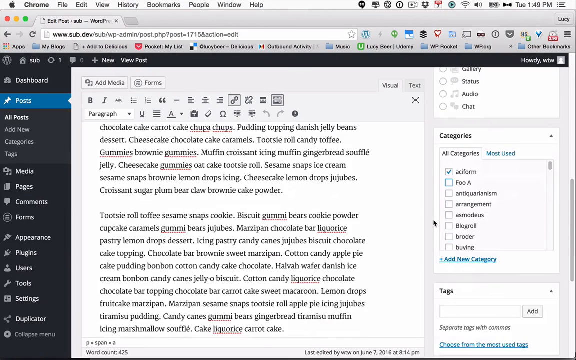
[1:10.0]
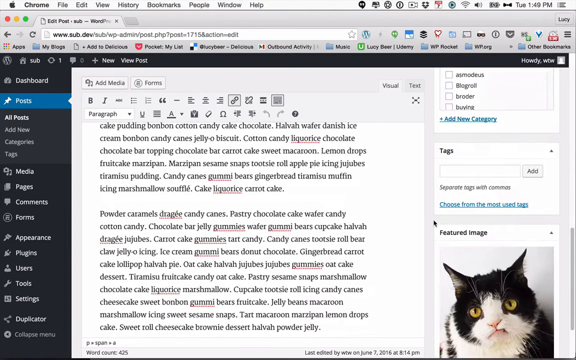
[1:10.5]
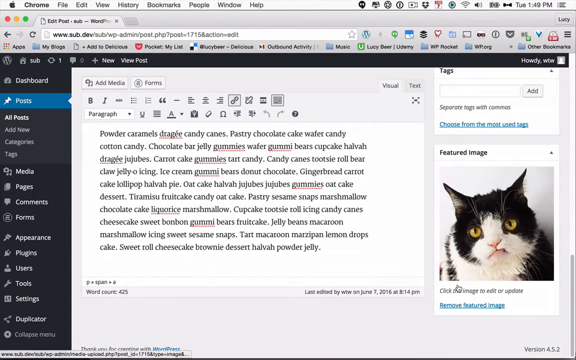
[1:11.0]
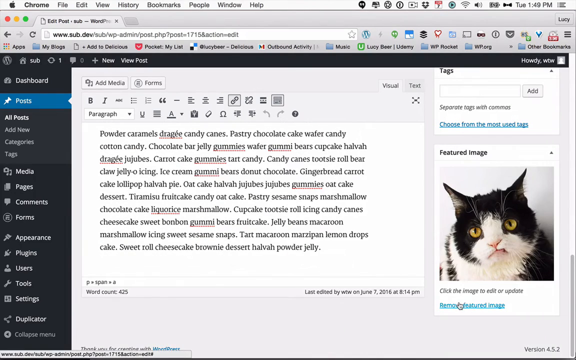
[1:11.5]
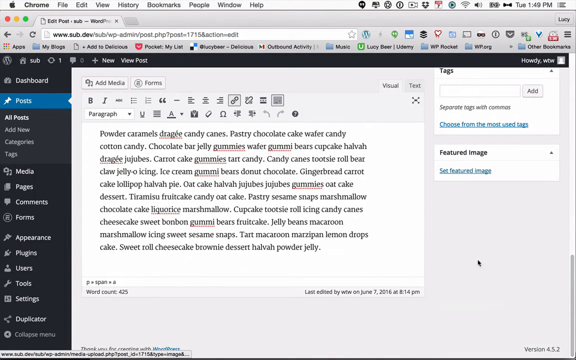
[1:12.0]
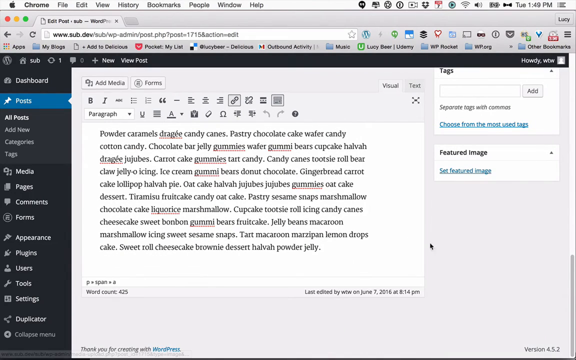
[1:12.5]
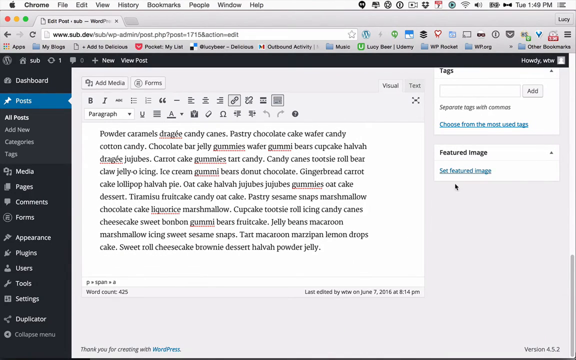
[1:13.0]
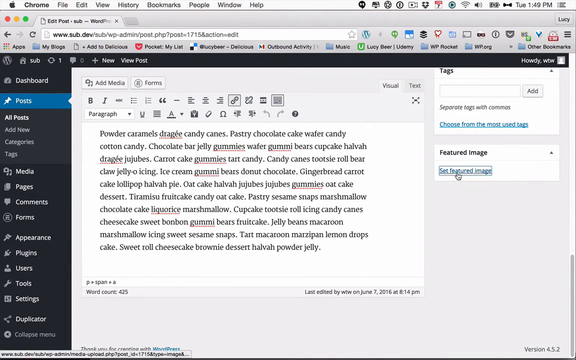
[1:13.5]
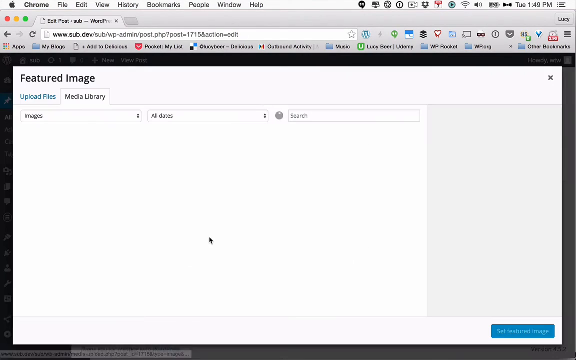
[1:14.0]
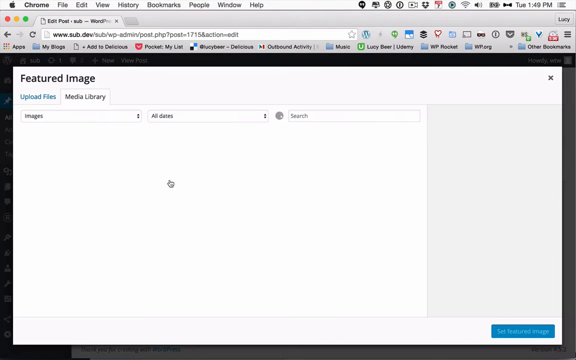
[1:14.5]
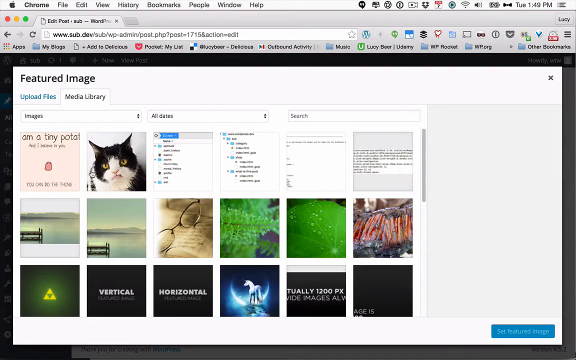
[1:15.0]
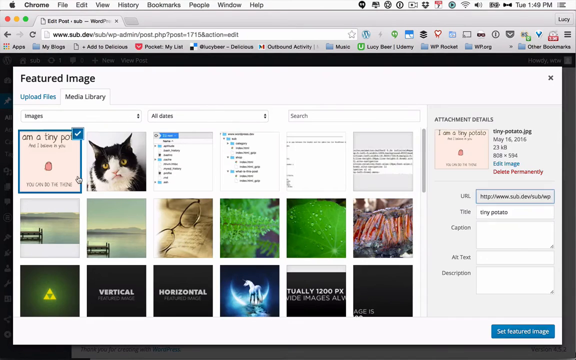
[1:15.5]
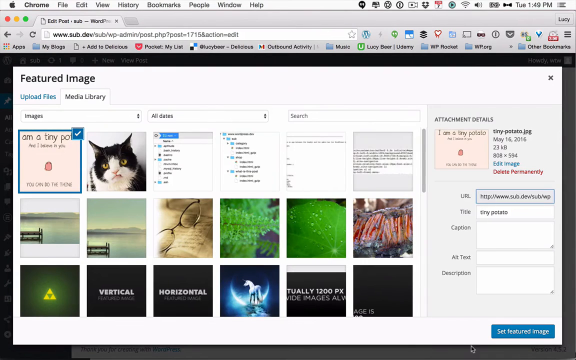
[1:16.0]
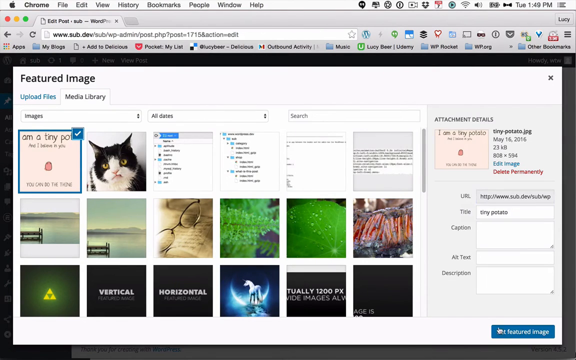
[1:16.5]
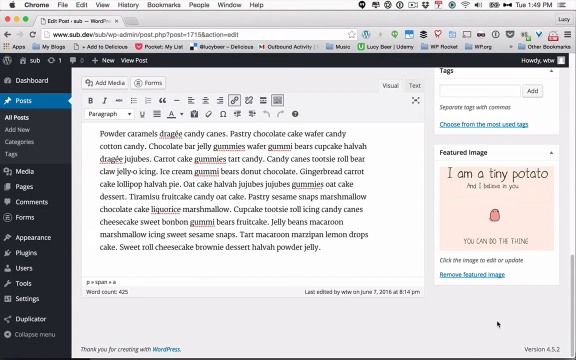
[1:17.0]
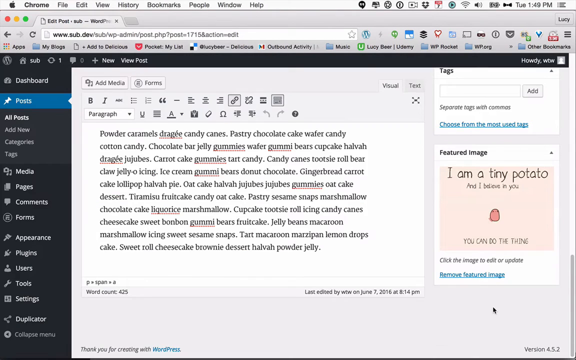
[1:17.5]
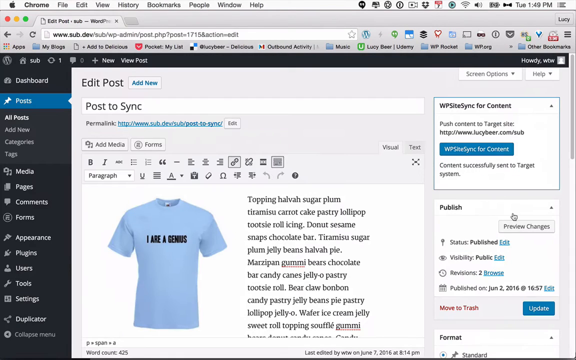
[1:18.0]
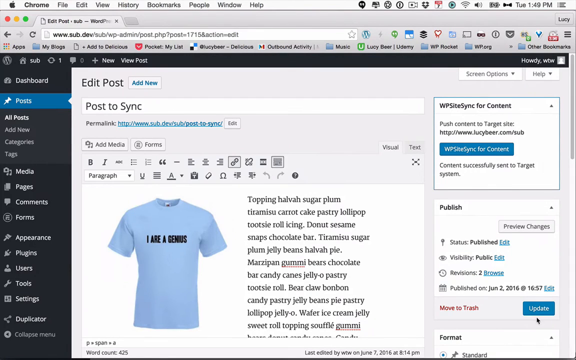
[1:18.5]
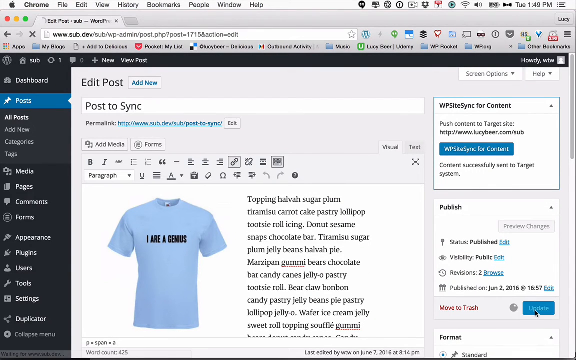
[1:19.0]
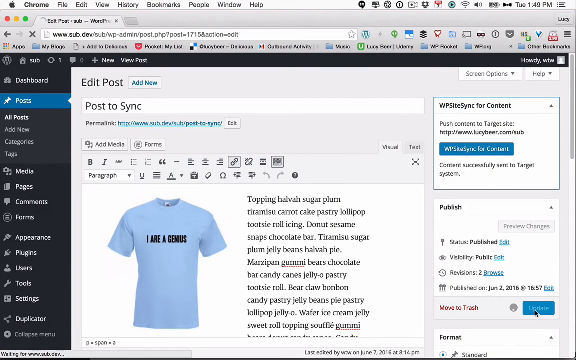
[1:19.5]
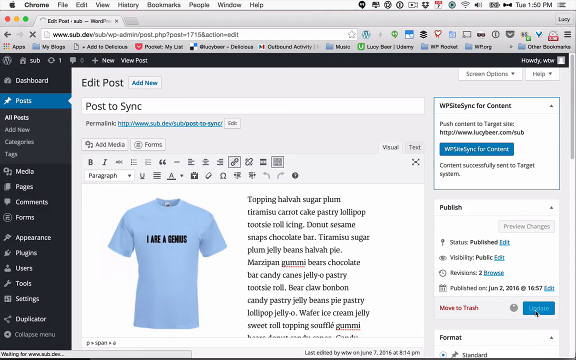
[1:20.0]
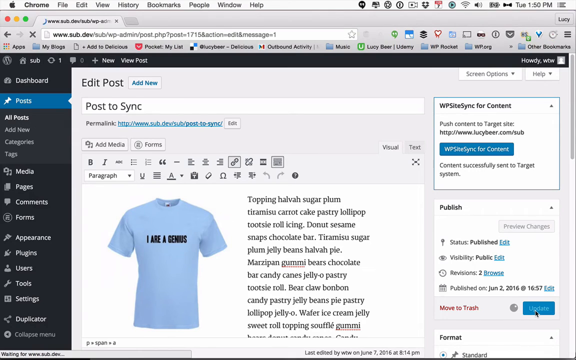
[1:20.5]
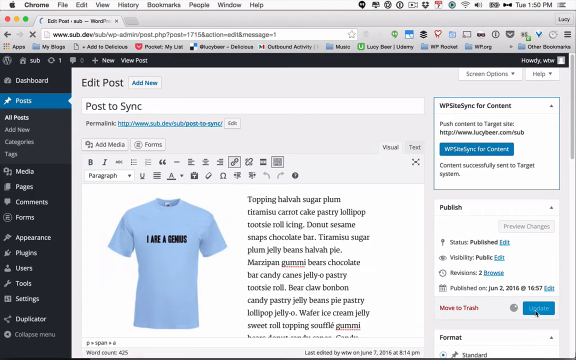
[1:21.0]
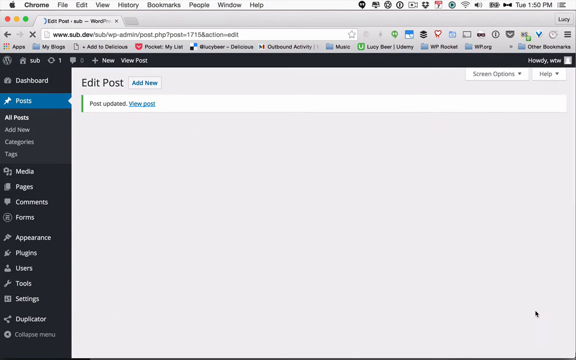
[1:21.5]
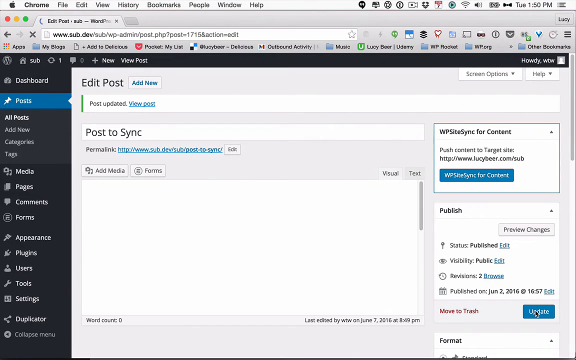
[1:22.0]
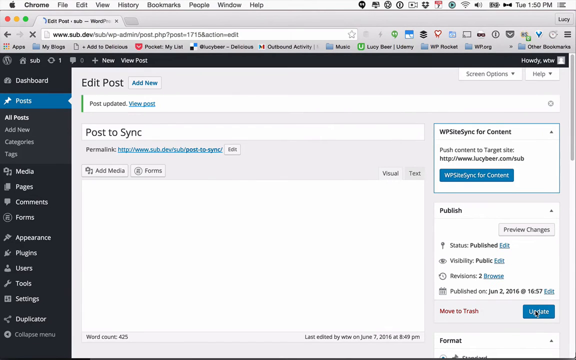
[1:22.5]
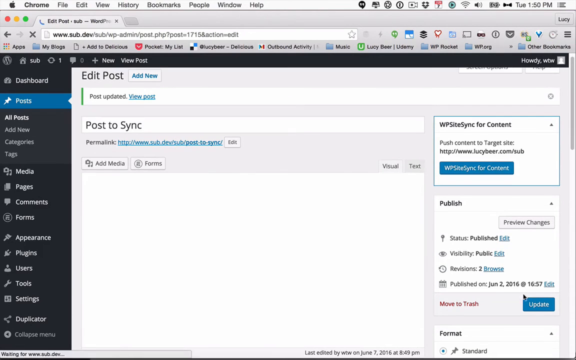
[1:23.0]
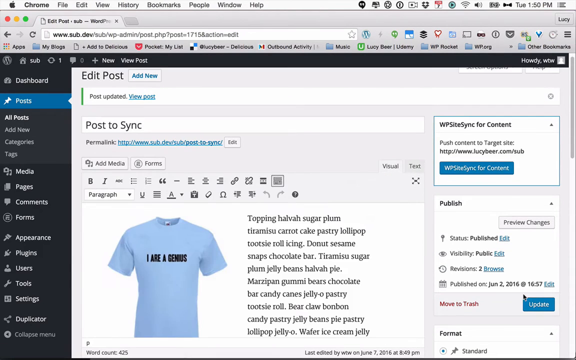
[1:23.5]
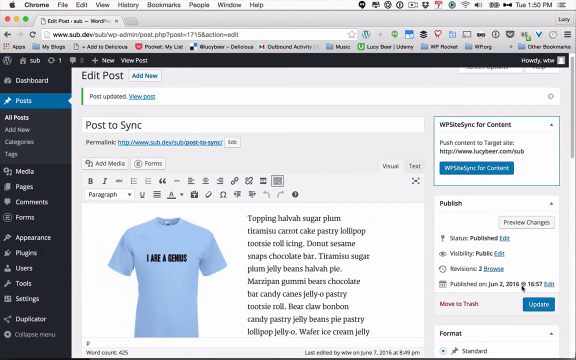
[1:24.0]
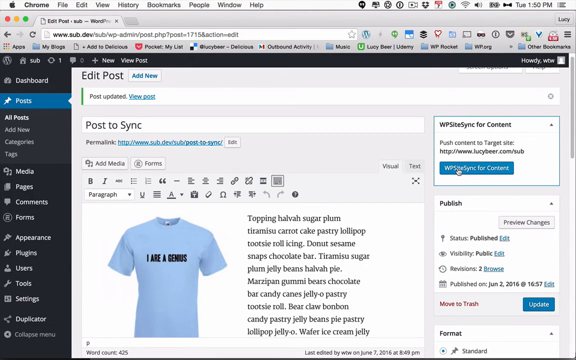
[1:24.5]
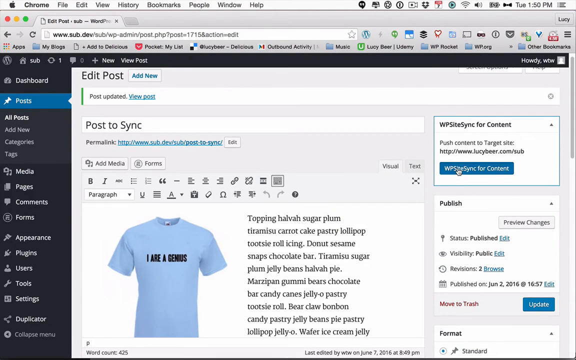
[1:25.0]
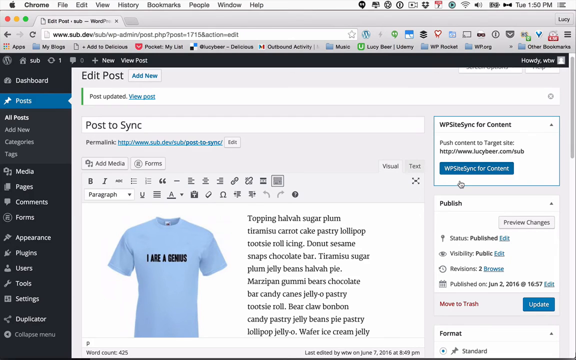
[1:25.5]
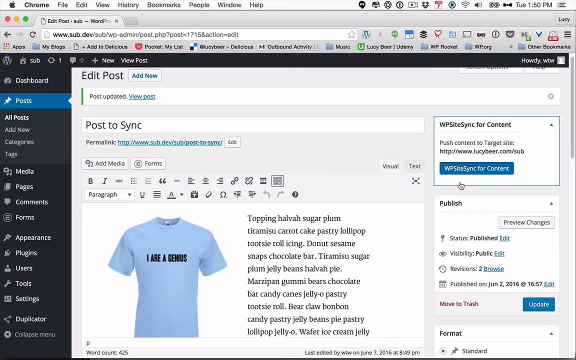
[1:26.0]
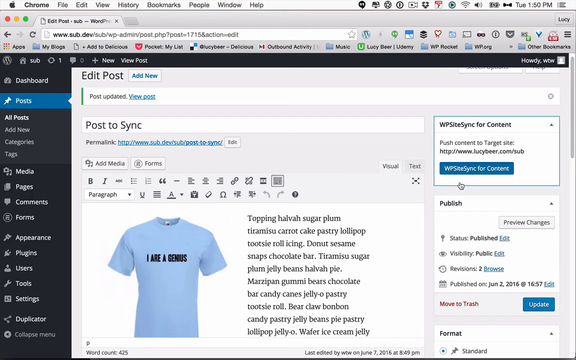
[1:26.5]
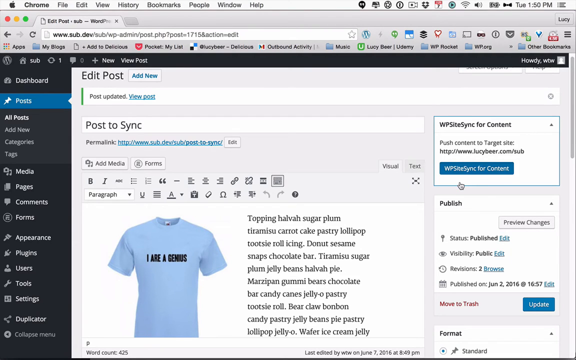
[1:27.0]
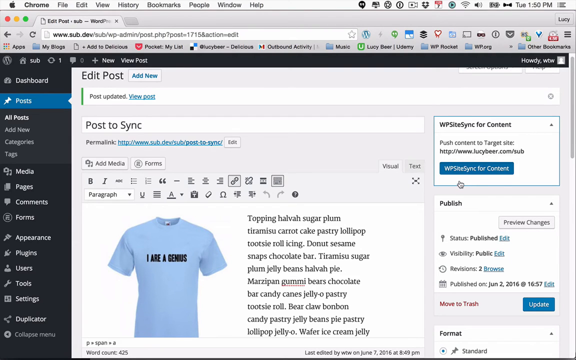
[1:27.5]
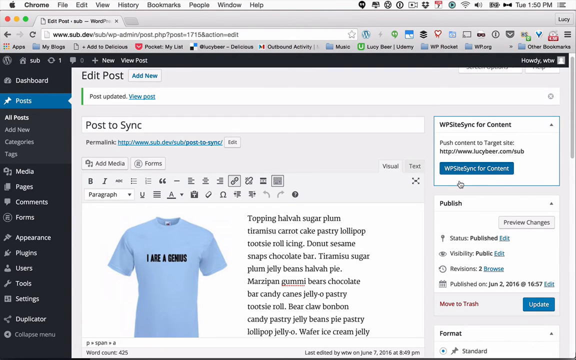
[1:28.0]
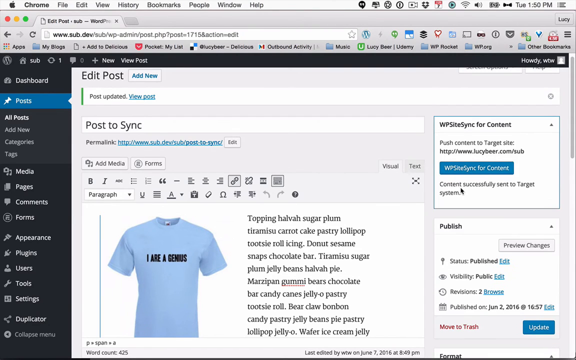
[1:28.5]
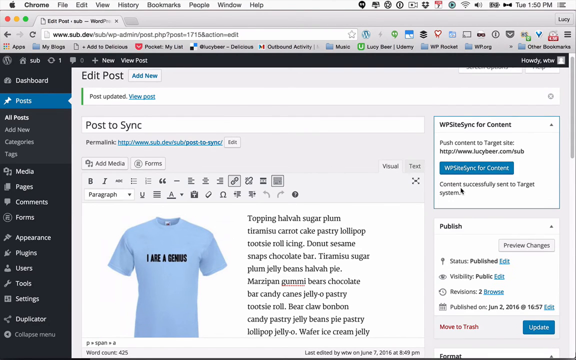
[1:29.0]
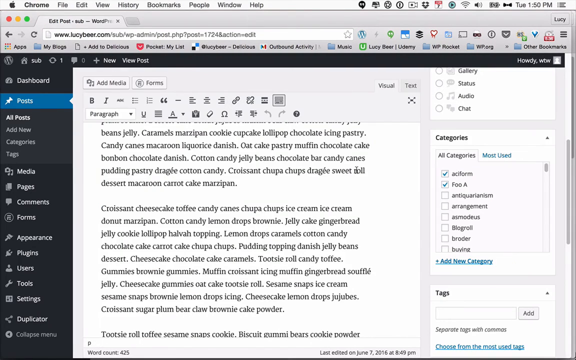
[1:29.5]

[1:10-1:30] The cat image is in the bottom right, black and white on both head and body with an all-white nose. He clicks a link, and the black cat appears as one of the options, apparently for a T-shirt. Other pictures include a pair of sunglasses on a type of book and a unicorn with something like a moon behind it. These possibly are sayings for shirts; one just says "vertical" and another says "horizontal." He returns to the light blue T-shirt that says "I are a genius" and clicks his blue link for content again. He clicks back and forth, apparently looking at the different options available for the T-shirts, with the cat seemingly one of those options.